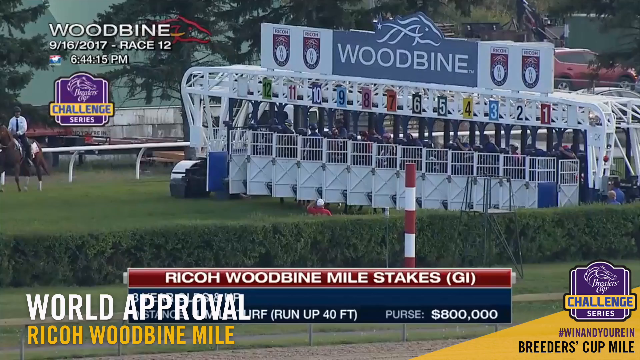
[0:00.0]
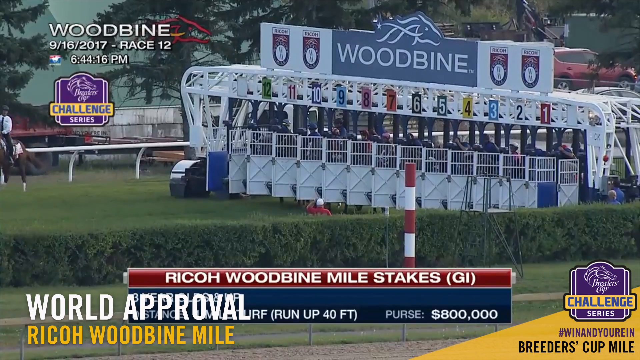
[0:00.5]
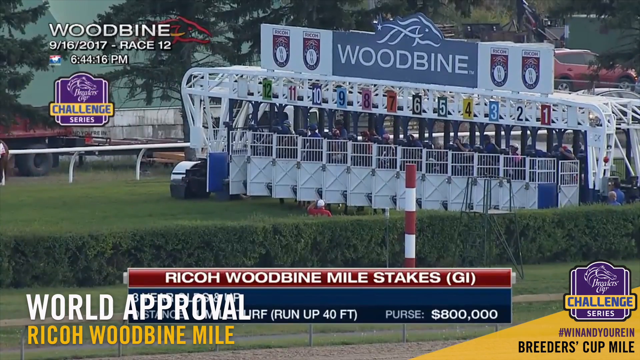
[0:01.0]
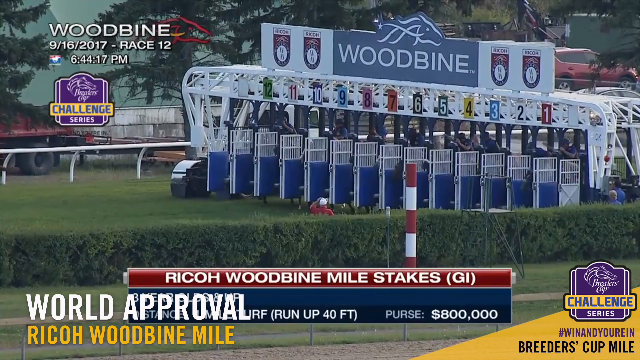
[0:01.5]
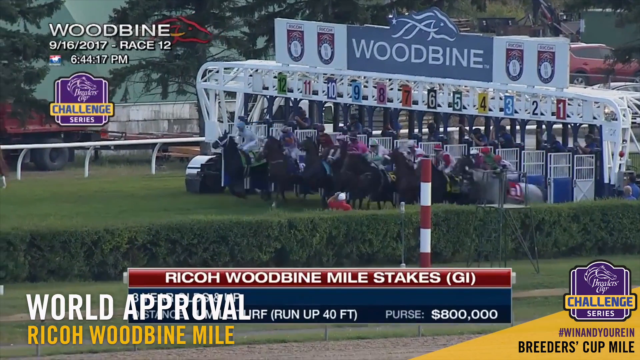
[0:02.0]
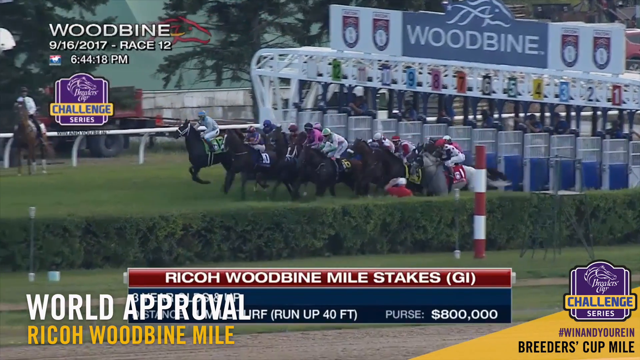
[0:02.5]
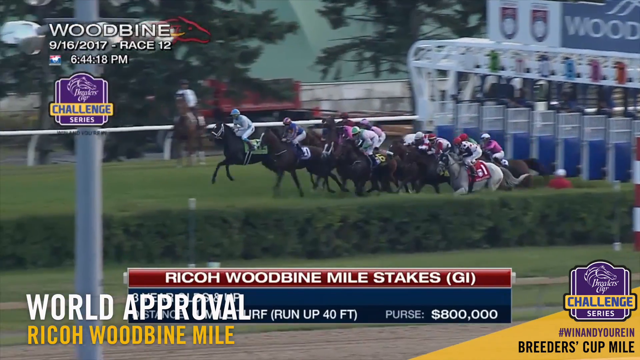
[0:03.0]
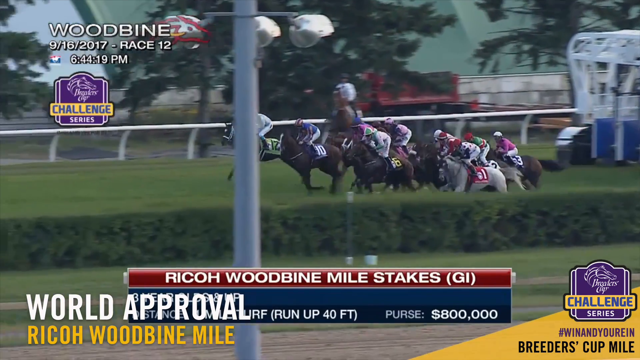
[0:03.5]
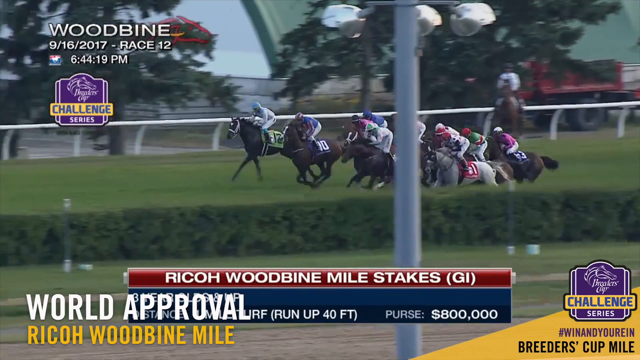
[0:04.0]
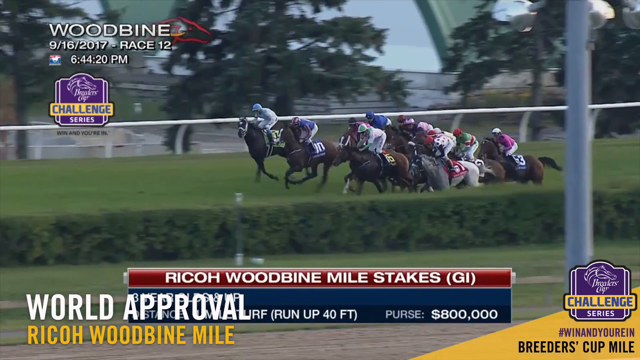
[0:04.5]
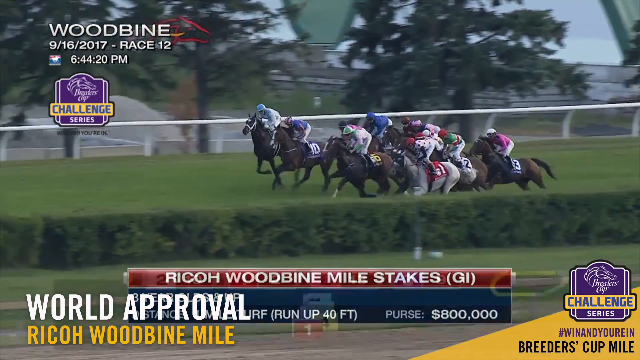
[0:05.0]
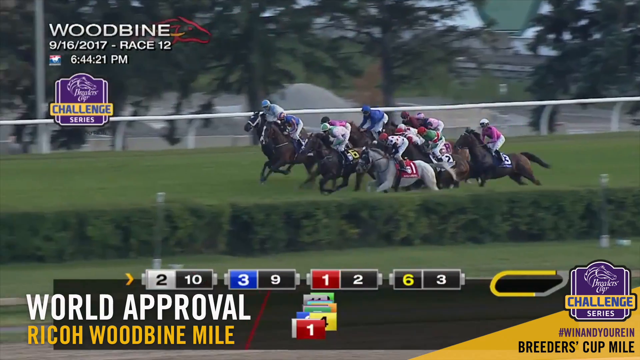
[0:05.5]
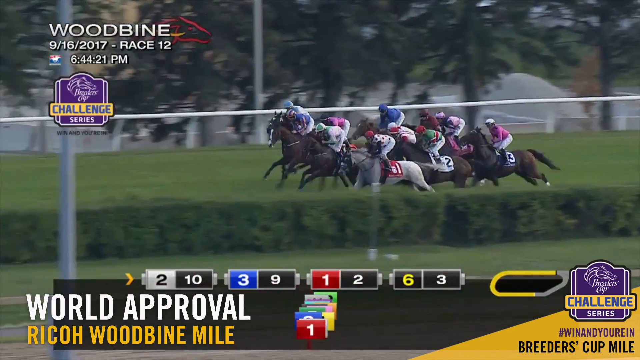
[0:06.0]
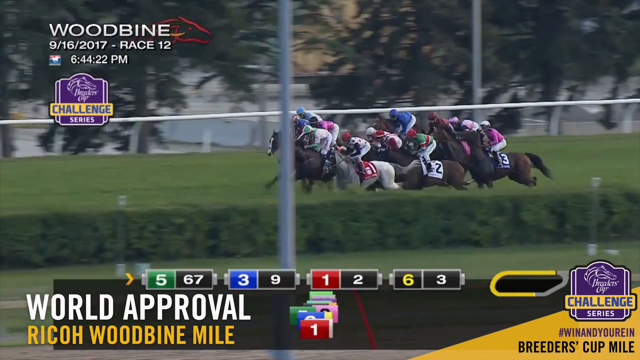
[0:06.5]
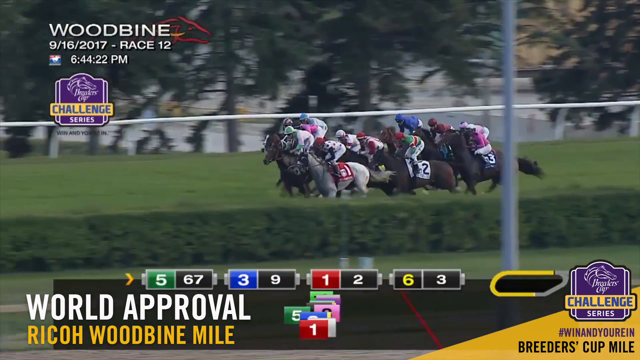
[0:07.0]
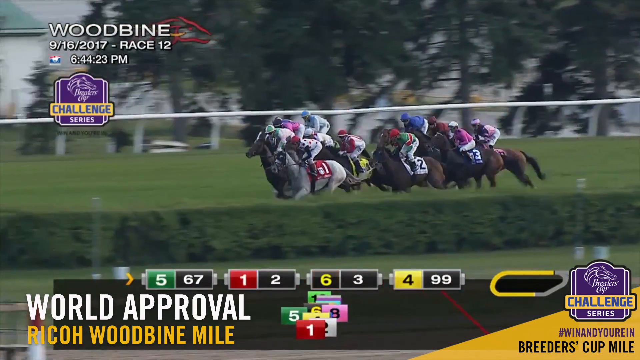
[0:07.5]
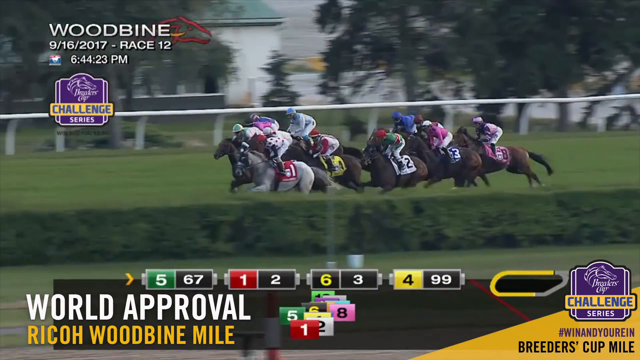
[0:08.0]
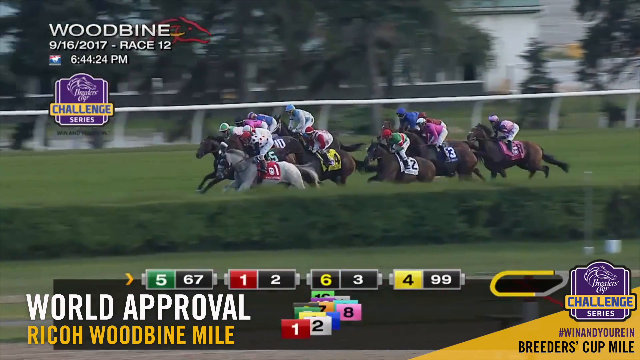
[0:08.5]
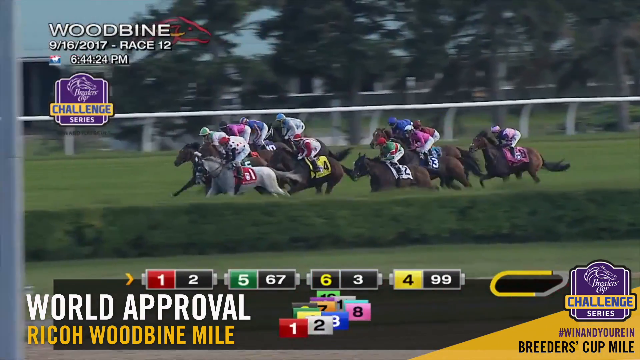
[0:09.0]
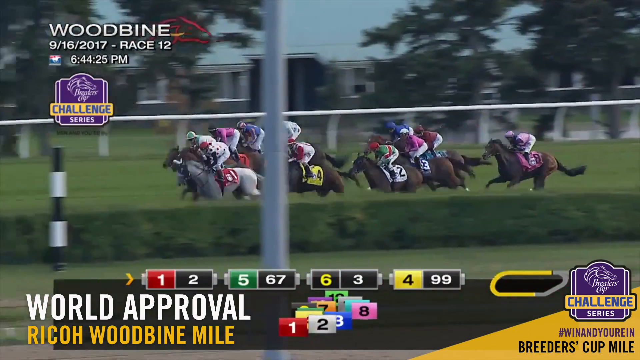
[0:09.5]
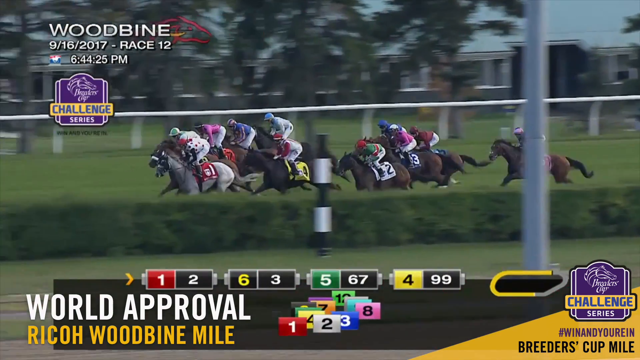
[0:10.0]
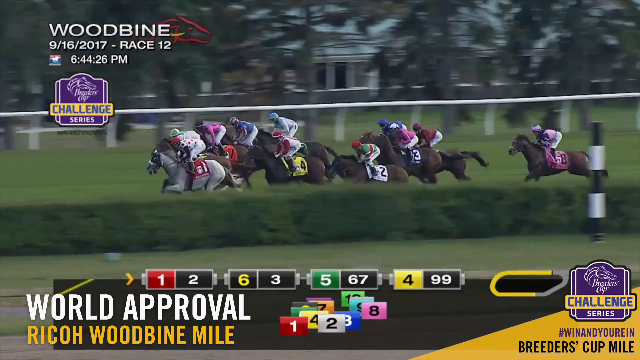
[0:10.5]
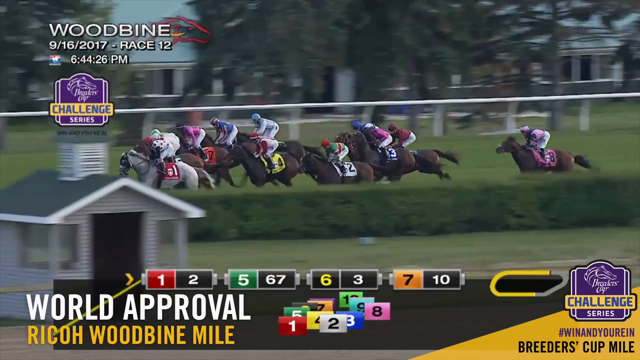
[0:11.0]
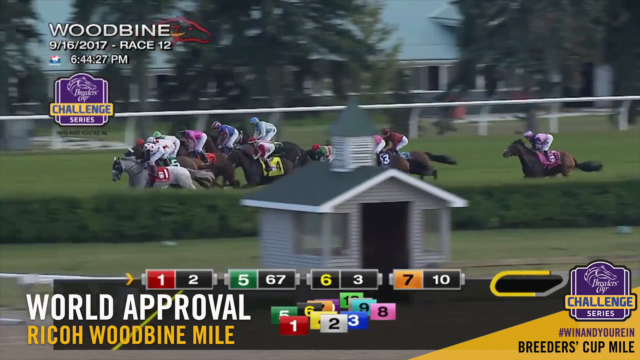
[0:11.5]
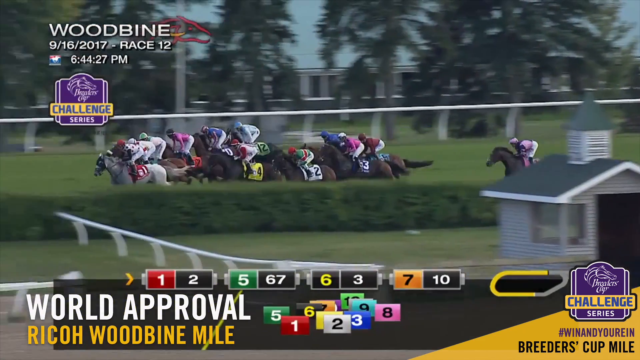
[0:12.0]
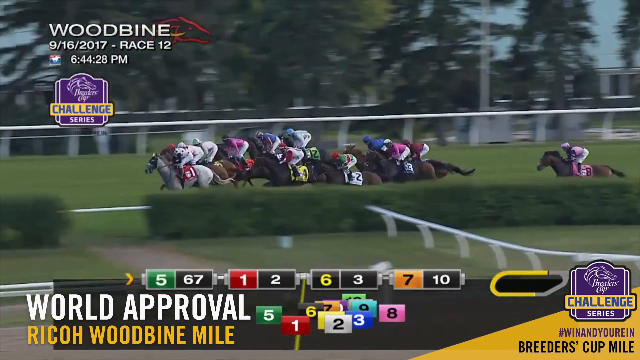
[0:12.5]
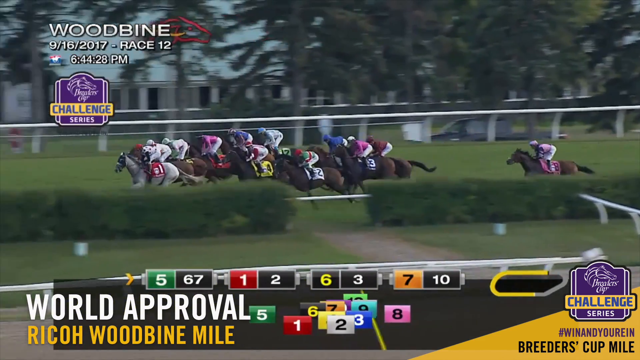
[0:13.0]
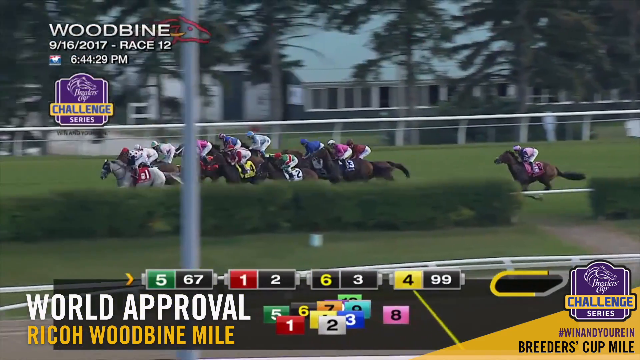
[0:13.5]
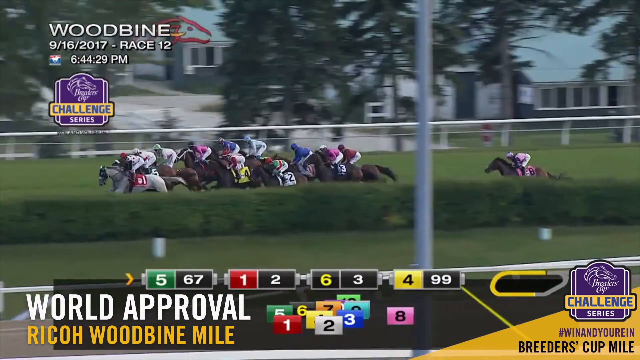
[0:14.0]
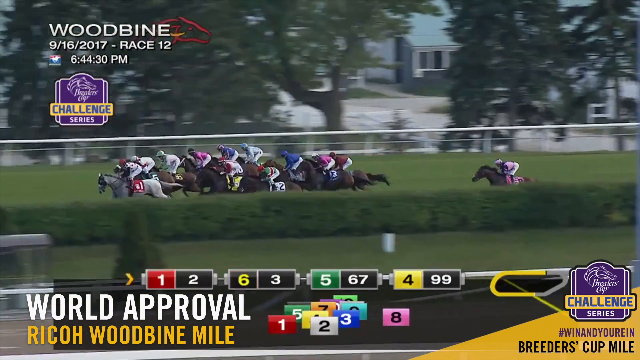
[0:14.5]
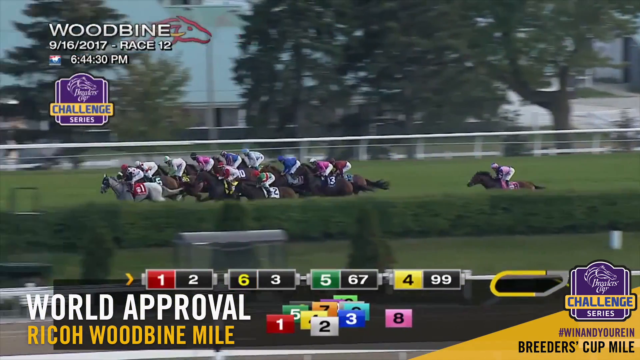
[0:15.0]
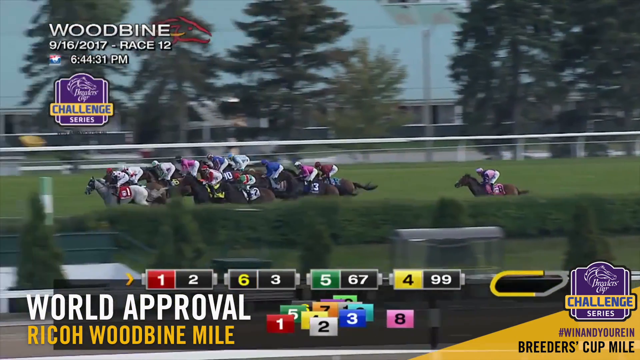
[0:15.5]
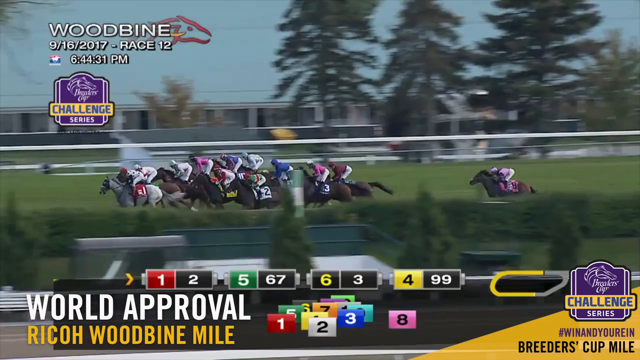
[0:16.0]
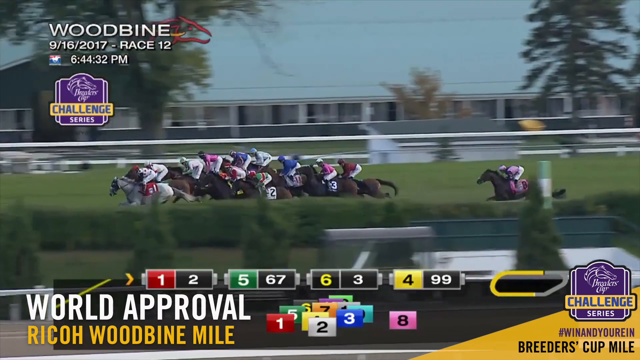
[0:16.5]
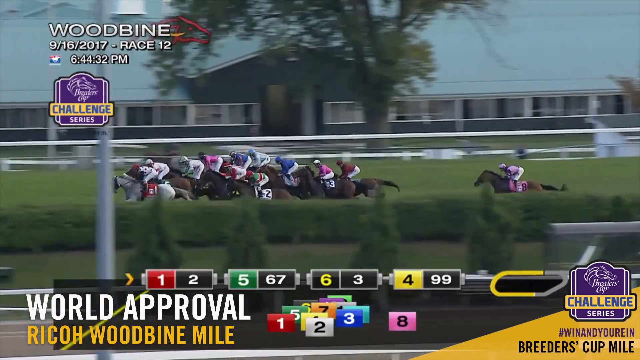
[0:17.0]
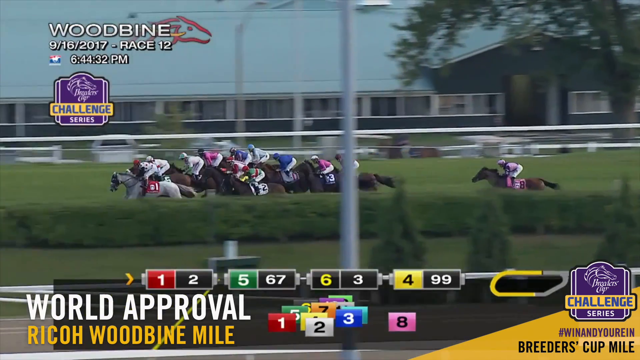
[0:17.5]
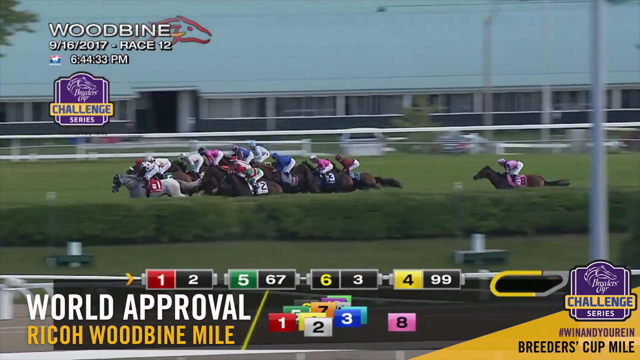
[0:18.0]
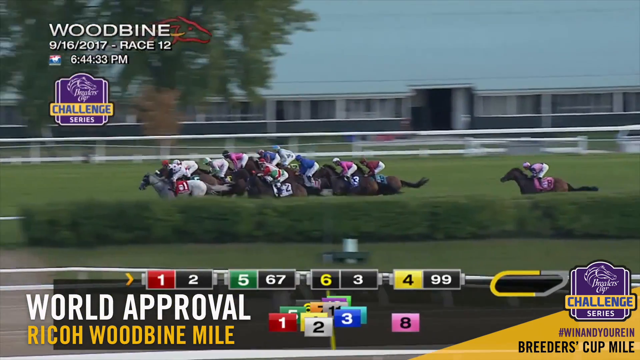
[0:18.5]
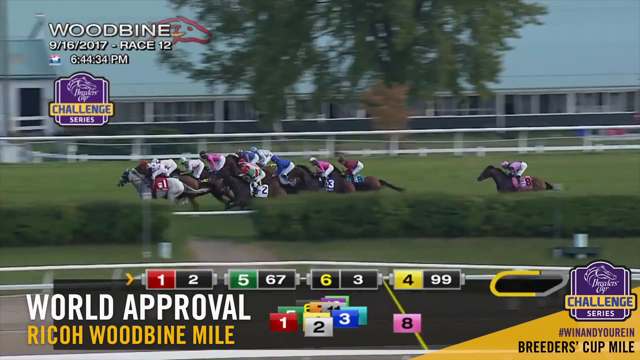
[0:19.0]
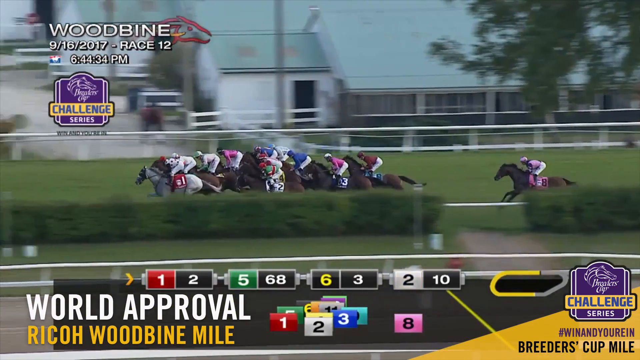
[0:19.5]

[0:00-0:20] A group of 12 horses with 12 jockeys races around a racetrack, apparently going anti-clockwise from the right-hand side of the screen to the left. As the race begins, the horses and jockeys are in a relatively small, bunched-up group. As it progresses, the space opens up; the horse with the red saddle, number one, takes the lead, and the horse with the pink saddle, number eight, is in last place. Each jockey wears a hat, jodhpurs and a jersey; their footwear cannot be made out, and they all appear to be male. Most of the horses are brown, and one is white. Text on the screen seems to name the race the "Rico Woodbine Milestakes", with a purse of eight hundred thousand dollars. At the bottom of the screen, the numbers, saddle colours and positions of the horses currently in the race are shown. Right at the start, to the left of the gates, a man in a white shirt on a brown horse is not involved in the race and appears to be some kind of official.